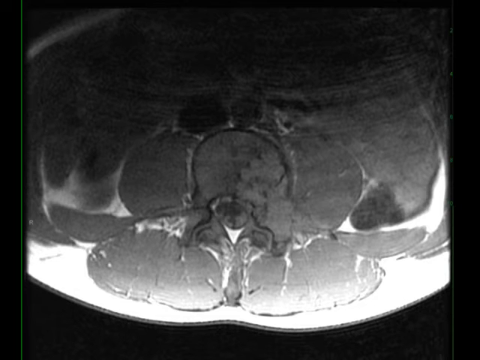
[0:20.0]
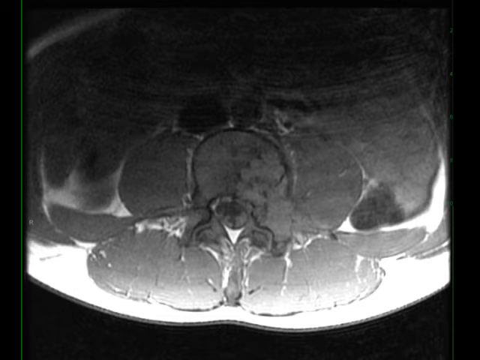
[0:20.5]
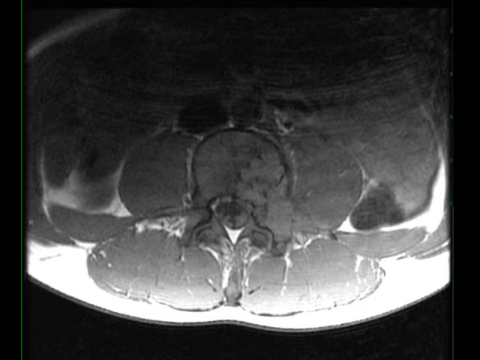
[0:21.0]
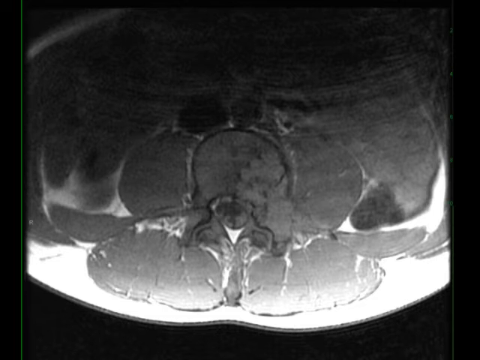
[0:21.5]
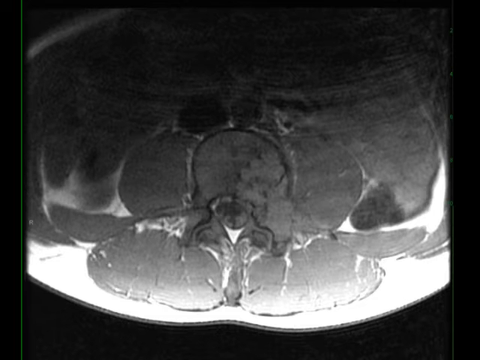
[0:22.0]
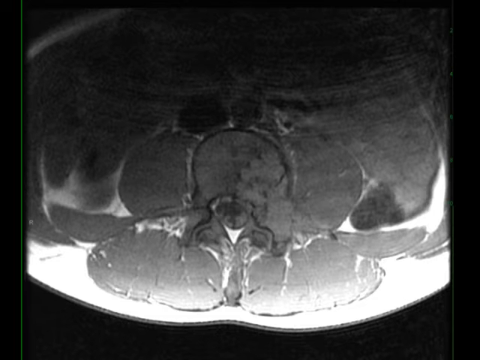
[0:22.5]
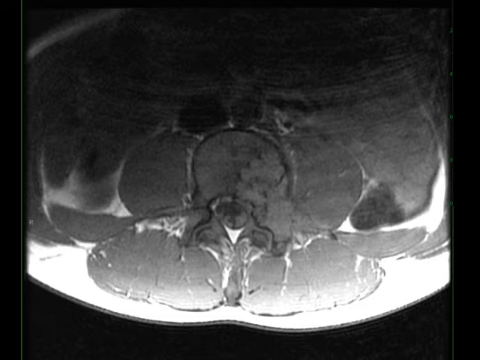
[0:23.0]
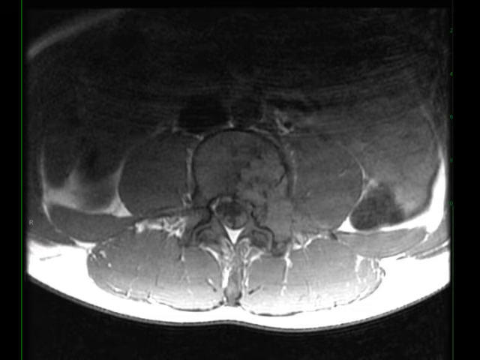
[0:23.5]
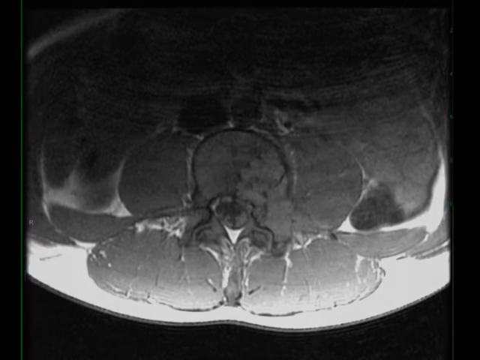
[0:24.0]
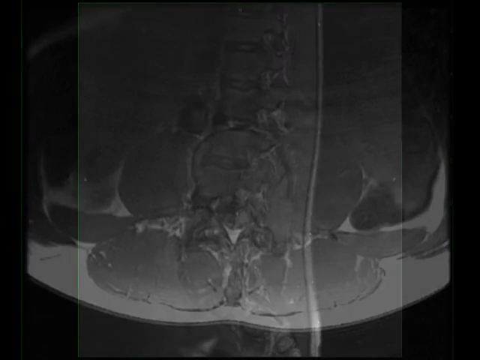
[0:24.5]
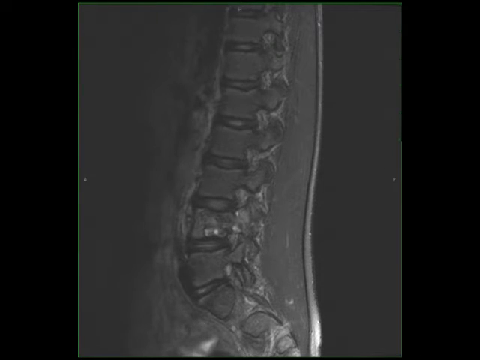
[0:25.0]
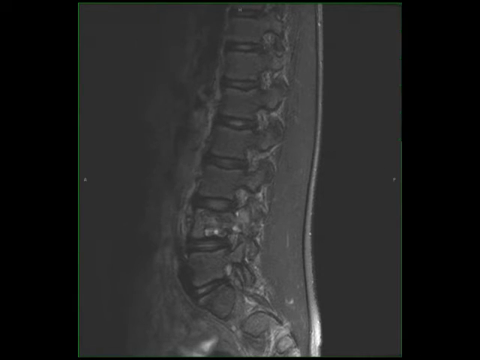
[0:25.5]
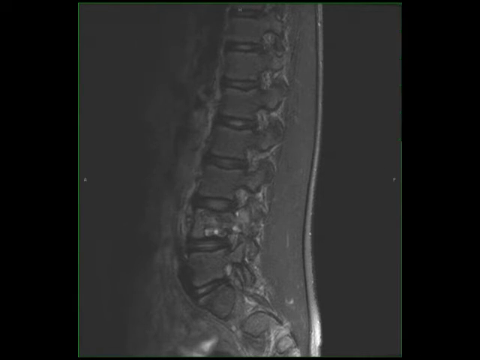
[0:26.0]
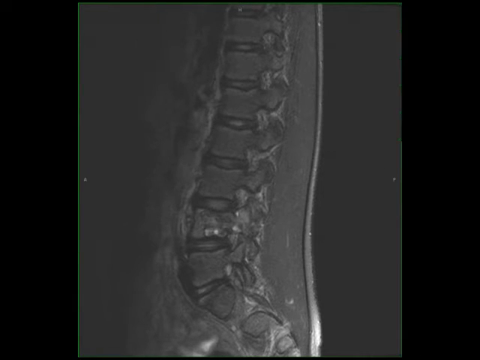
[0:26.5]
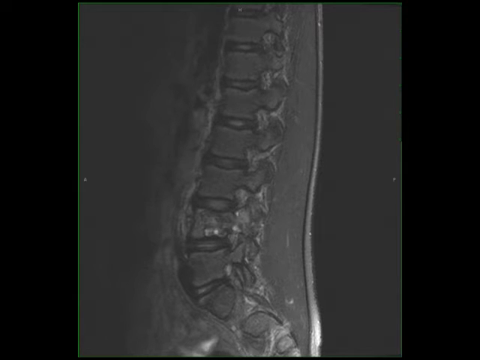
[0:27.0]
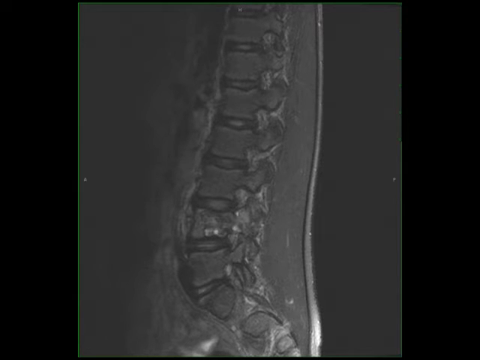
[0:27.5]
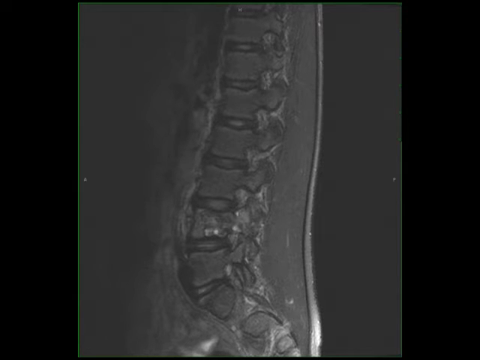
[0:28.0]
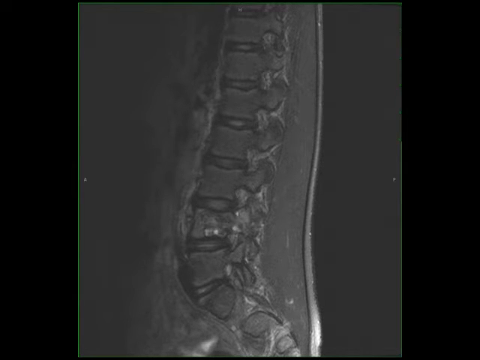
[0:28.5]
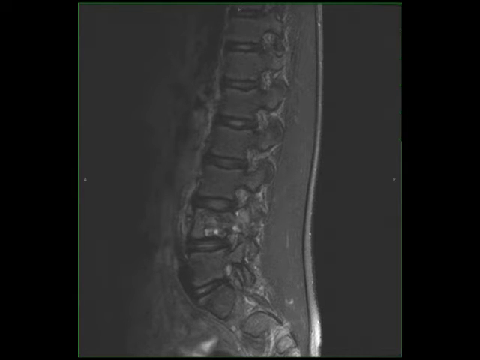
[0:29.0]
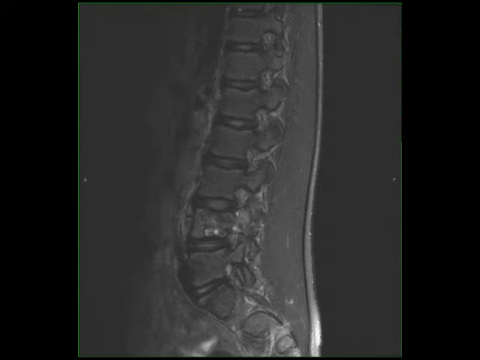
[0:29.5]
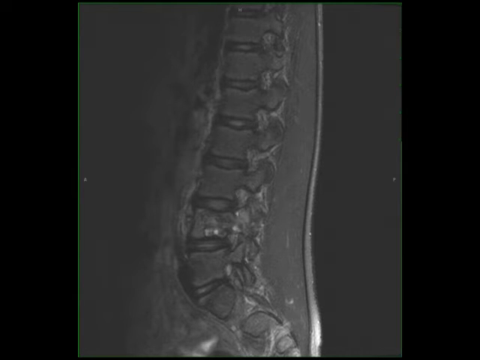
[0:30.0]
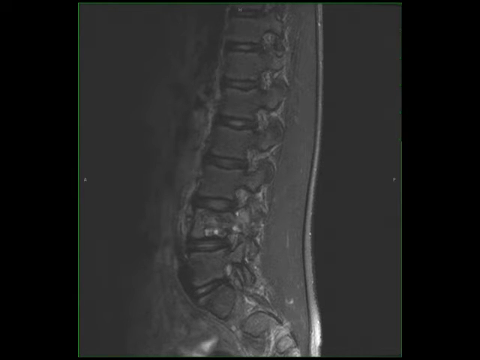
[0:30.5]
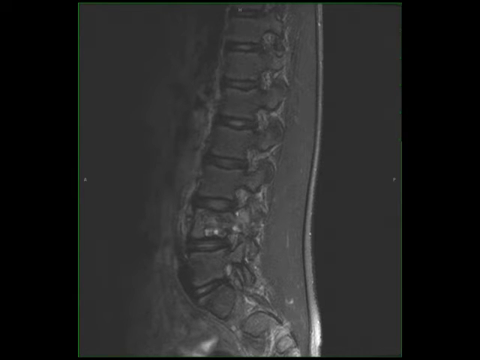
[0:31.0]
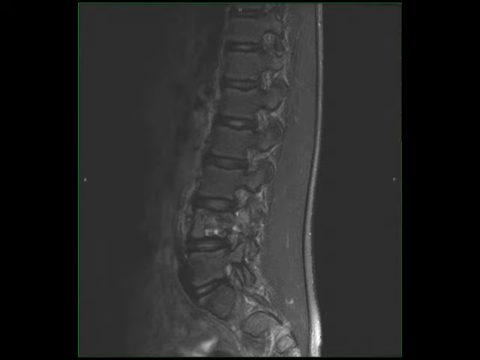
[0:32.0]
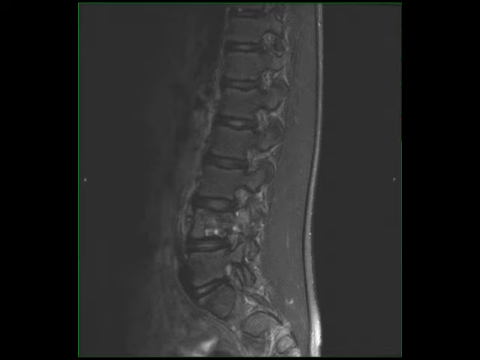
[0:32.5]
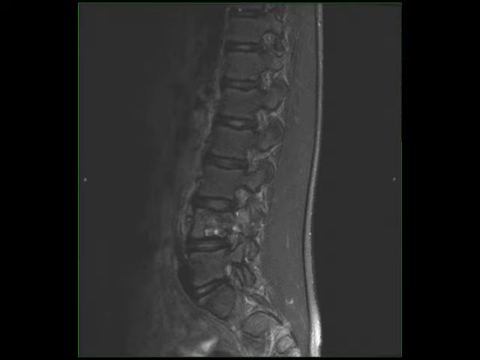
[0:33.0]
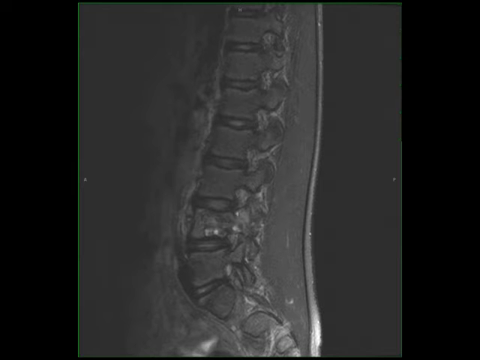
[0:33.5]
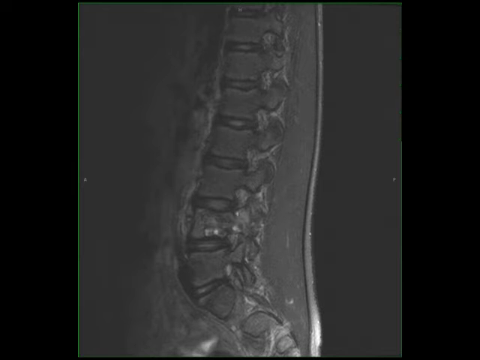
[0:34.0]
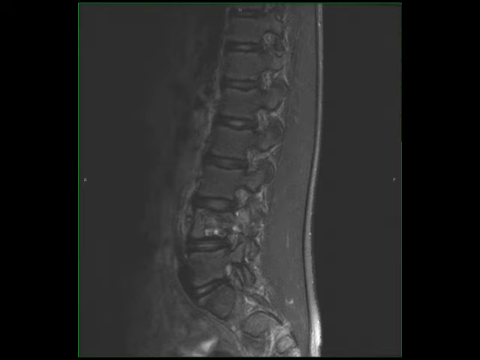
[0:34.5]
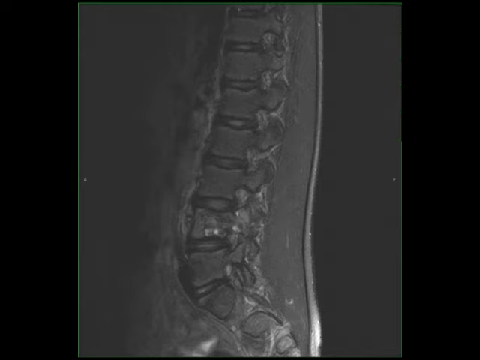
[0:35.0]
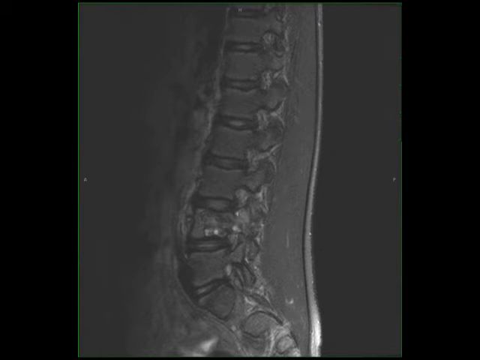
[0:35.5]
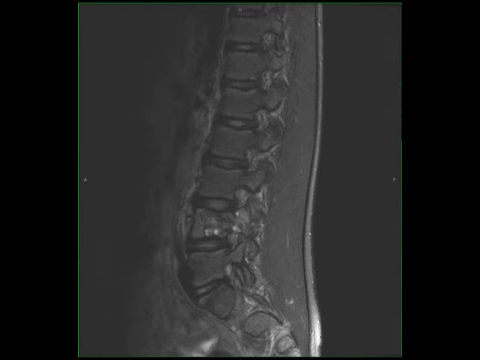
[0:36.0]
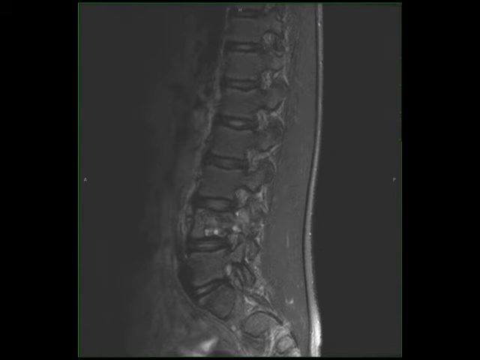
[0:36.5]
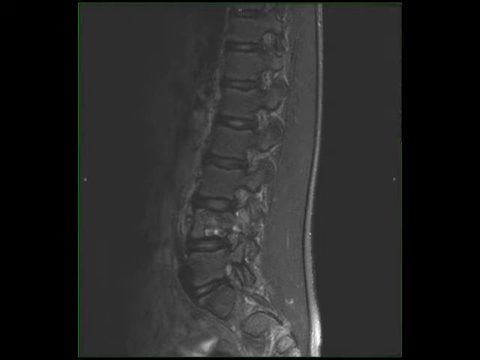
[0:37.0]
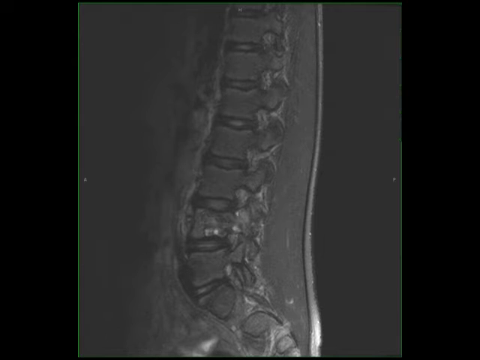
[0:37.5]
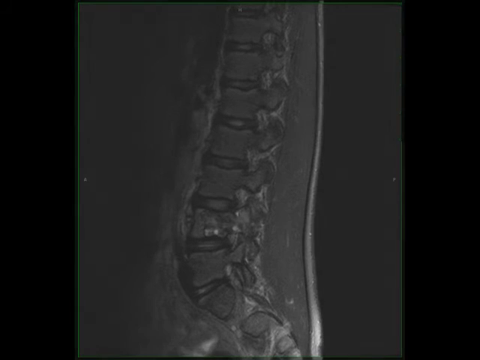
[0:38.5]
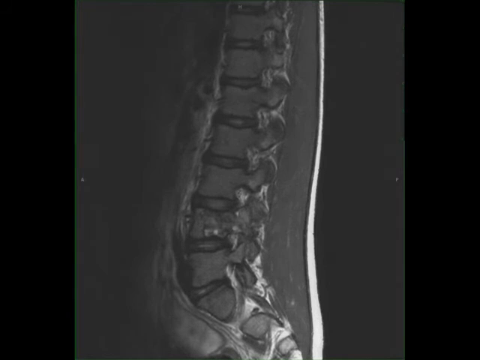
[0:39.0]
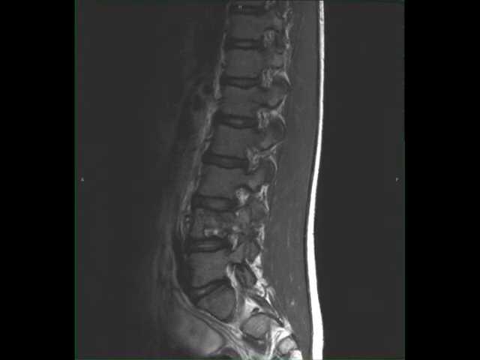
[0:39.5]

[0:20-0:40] The image looks like a sagittal x-ray from the top down. It changes to show the vertebrae, with the person facing toward the left of the screen; seven vertebrae can be counted, with the bottom toward the coccyx area. It then changes to a lighter area in which a more distinguished outline of the vertebrae is visible. The spine comes down pretty straight, then curves out at the bottom area, curves back sharply to the buttocks area, and then comes slightly down. When the image is highlighted, a wide highlight comes through, showing more distinctive features of the vertebrae and more of the area, with more distinct vertebrae. The column between the skeleton and the vertebrae is visible. A dark outline takes up one-fourth of each side, with a gray area in the middle, and a green line comes down from the left side, a fourth of the way in, over toward the right.